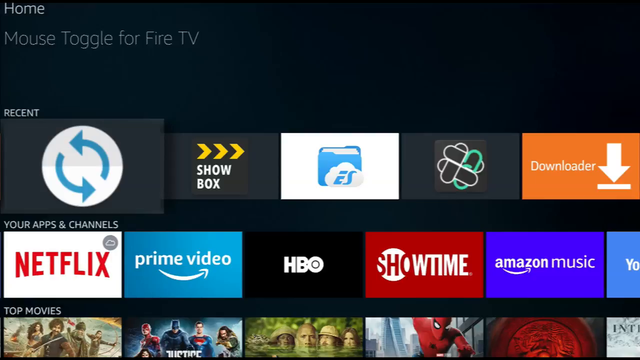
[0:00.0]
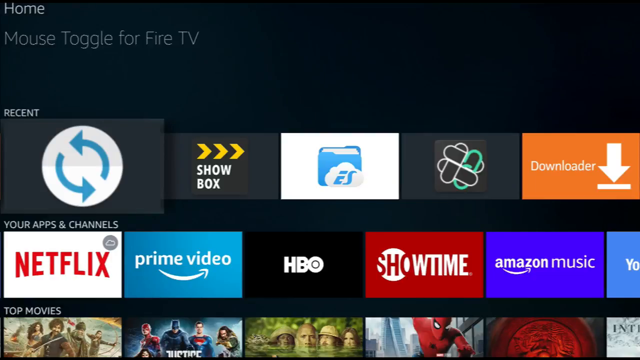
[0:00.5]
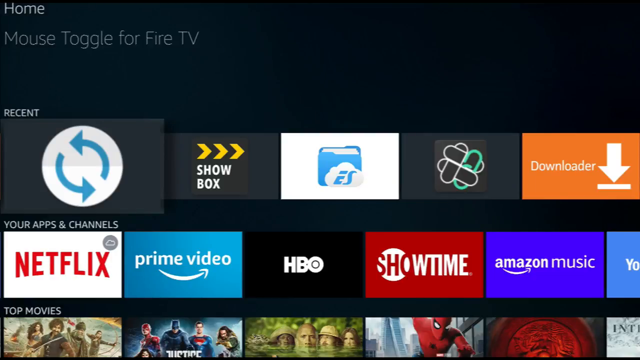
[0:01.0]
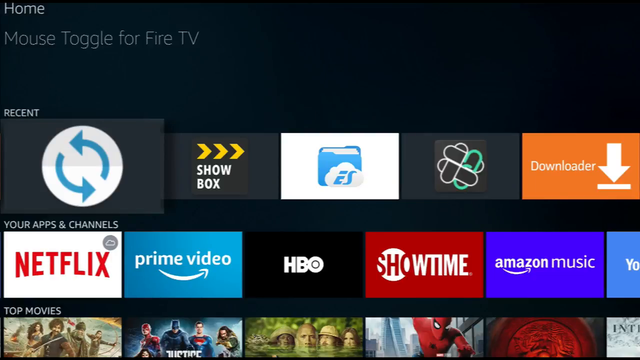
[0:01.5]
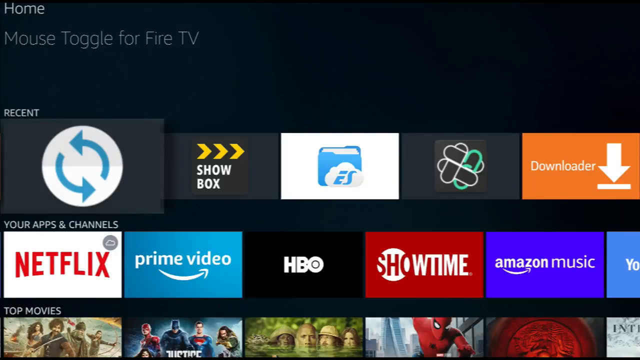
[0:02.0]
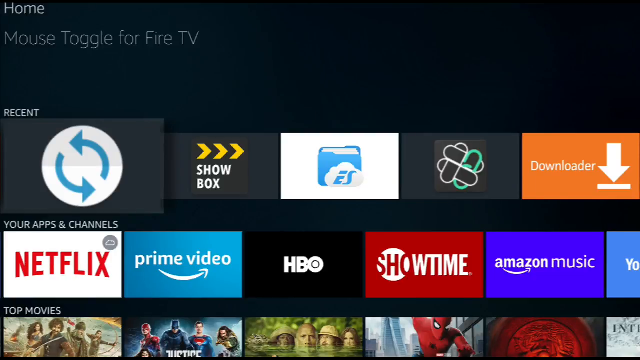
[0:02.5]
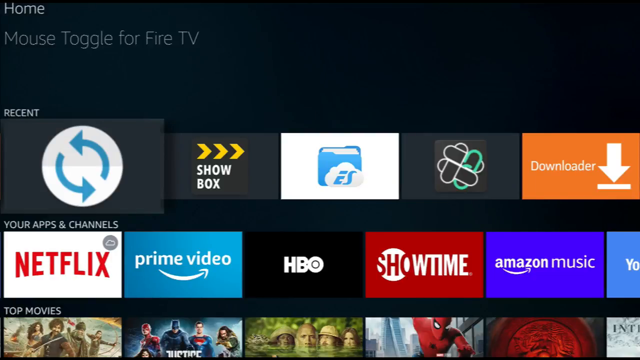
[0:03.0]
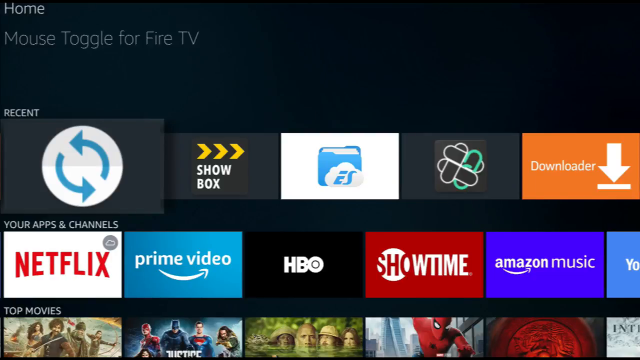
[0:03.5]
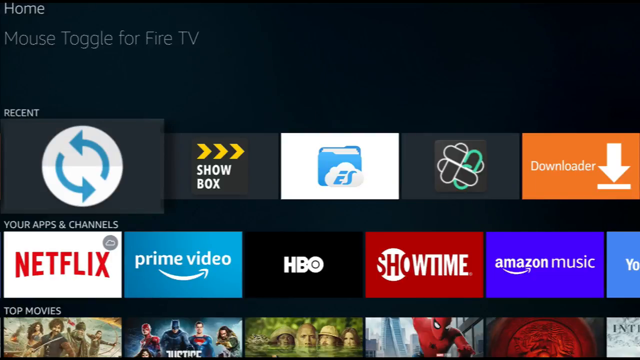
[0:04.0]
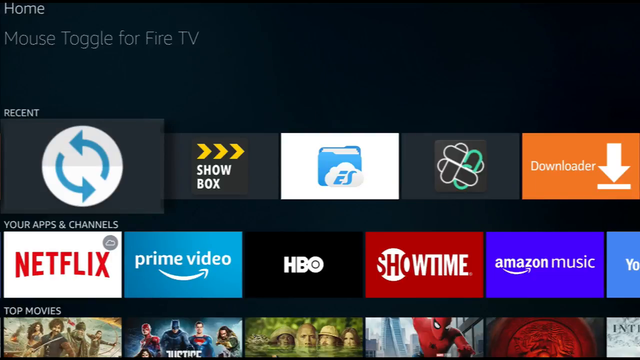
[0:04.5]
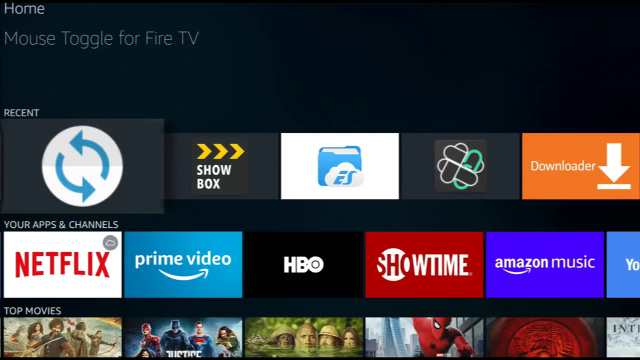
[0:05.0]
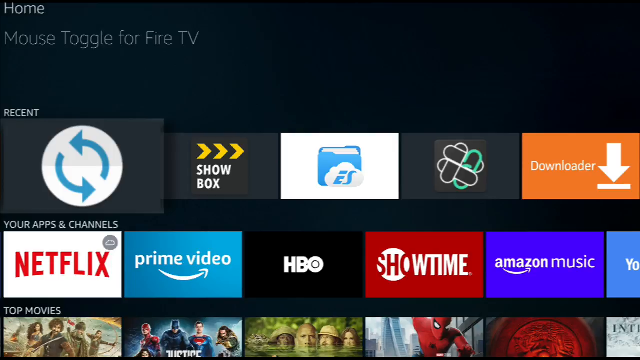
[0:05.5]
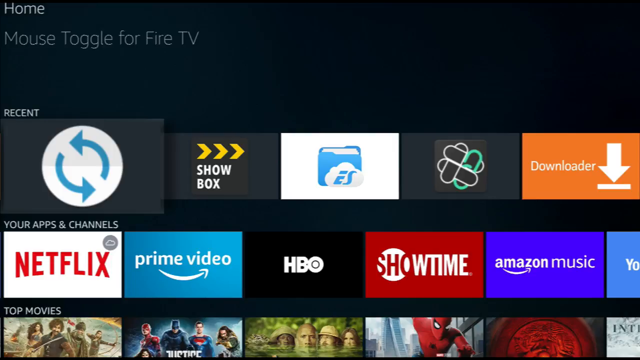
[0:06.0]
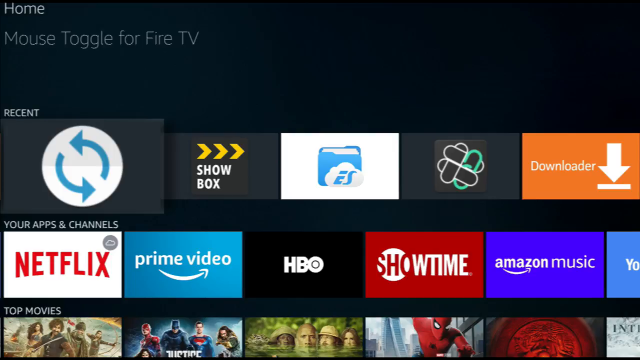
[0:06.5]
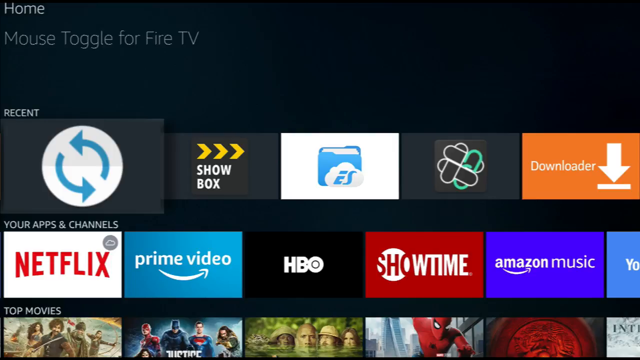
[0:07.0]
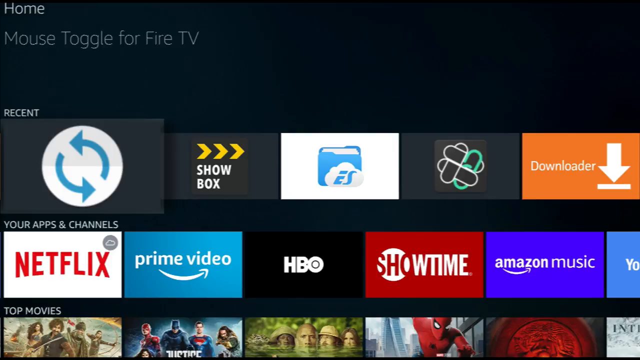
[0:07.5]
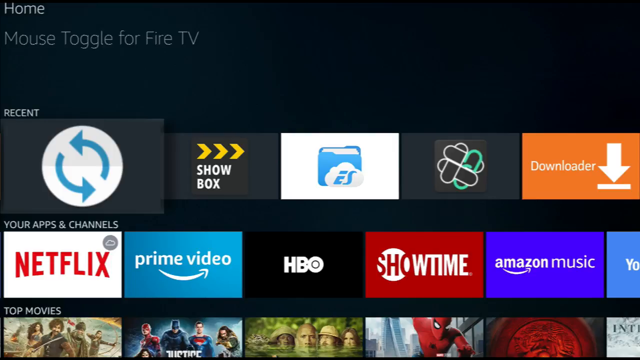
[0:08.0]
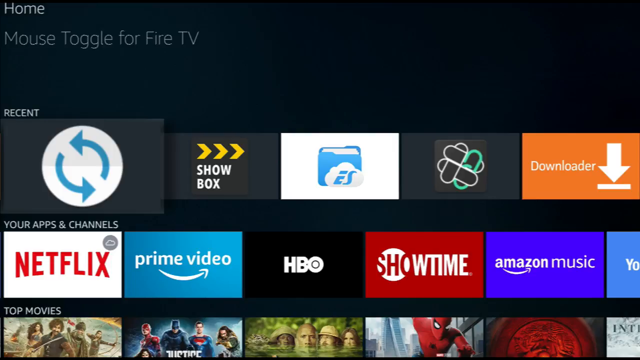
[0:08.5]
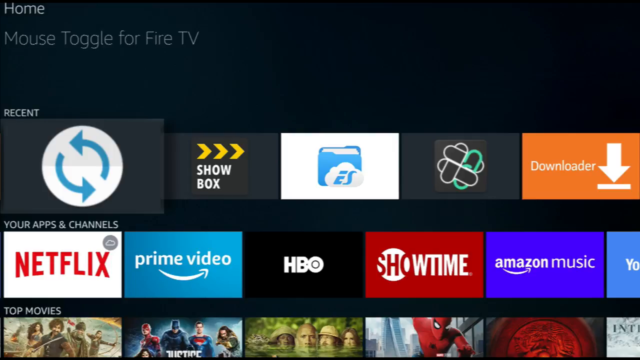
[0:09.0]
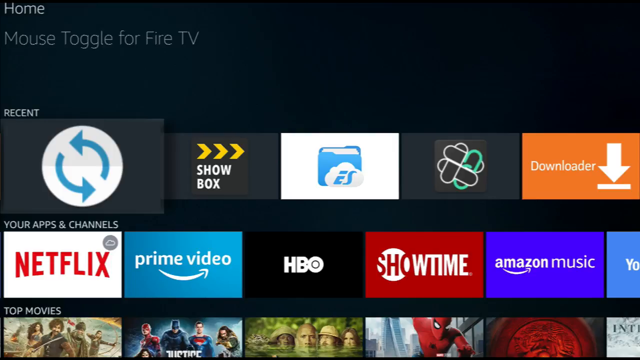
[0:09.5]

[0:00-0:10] The video opens on a black screen with dark colors showing icons for recent apps and for apps and channels on the device, seemingly a Fire TV. A column of recent items includes a downloader app, and the apps and channels include Netflix, Prime Video, HBO, Showtime and Amazon Music. Each app has its own logo and colors, such as white, red, black and blue. Along the bottom are movies, shown with various popular movie logos.